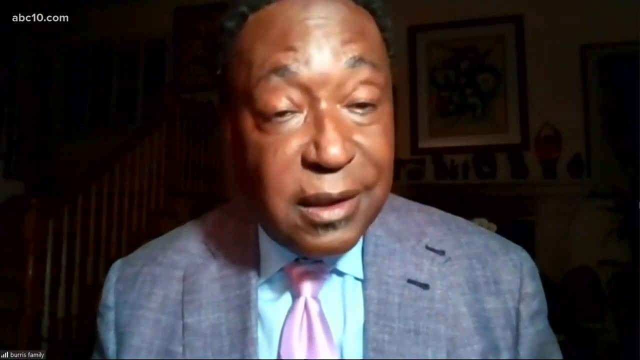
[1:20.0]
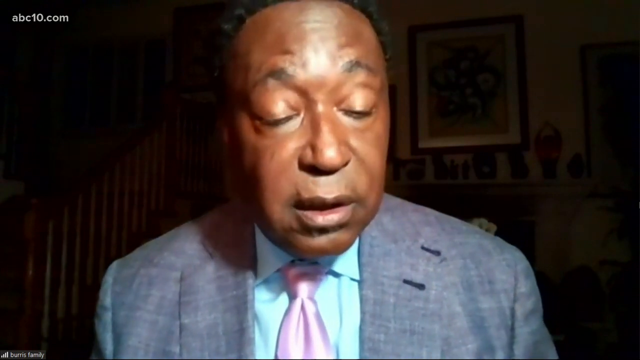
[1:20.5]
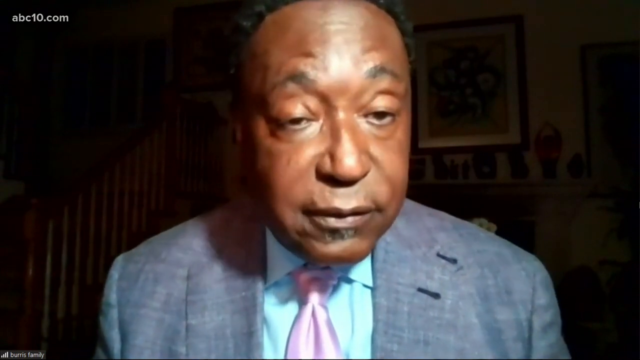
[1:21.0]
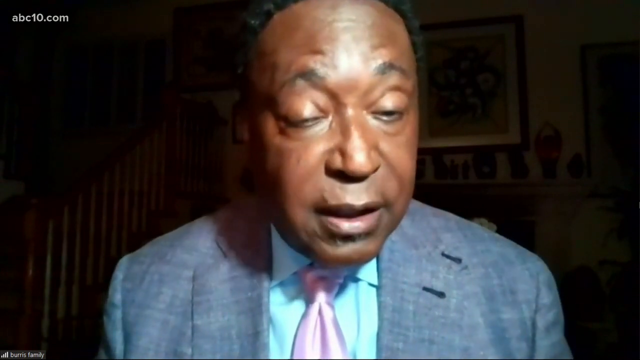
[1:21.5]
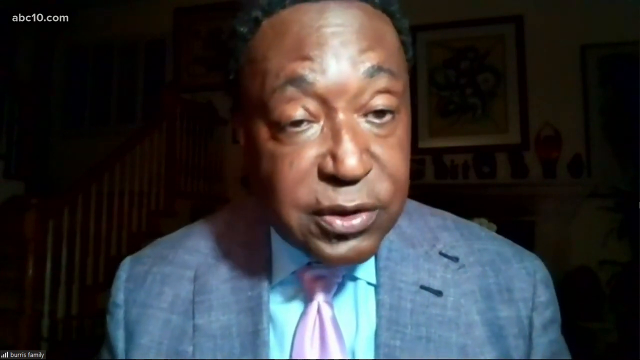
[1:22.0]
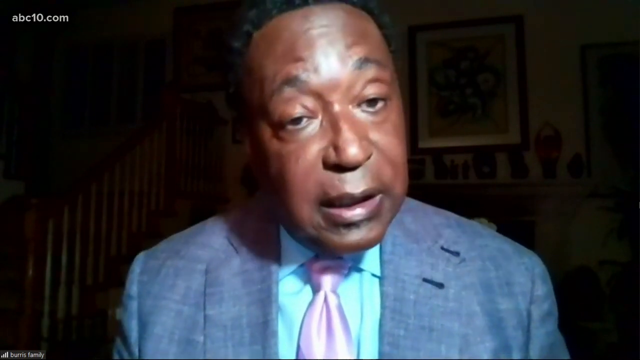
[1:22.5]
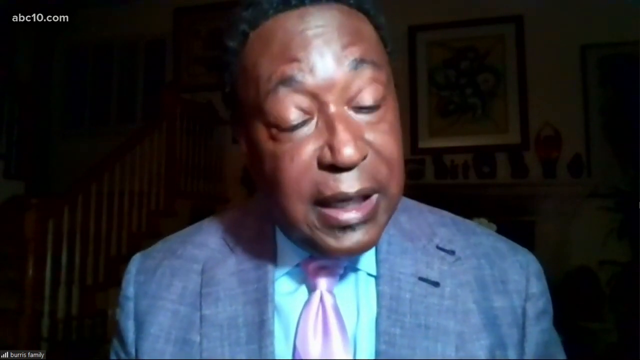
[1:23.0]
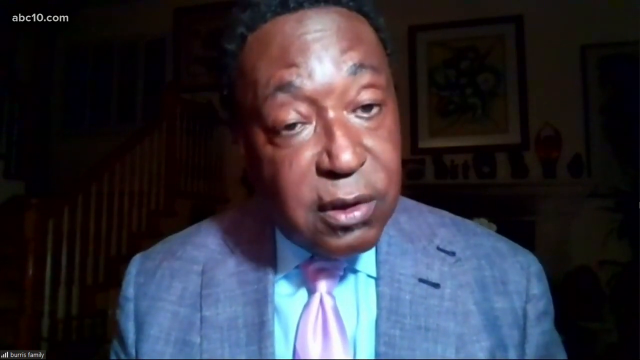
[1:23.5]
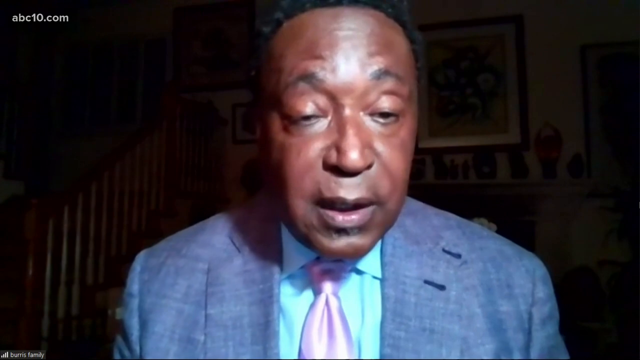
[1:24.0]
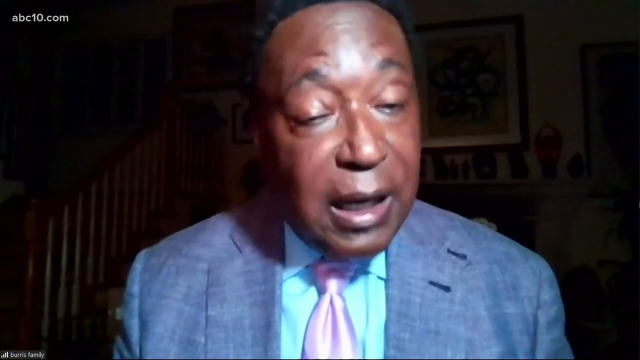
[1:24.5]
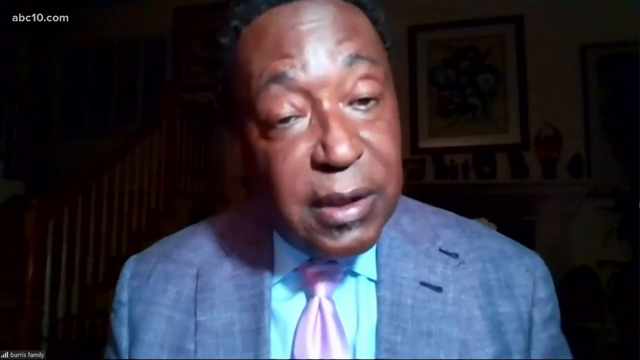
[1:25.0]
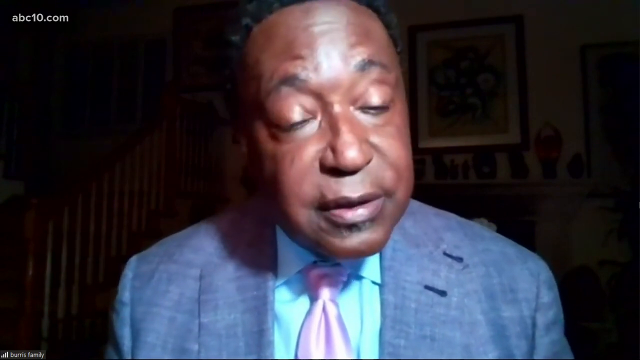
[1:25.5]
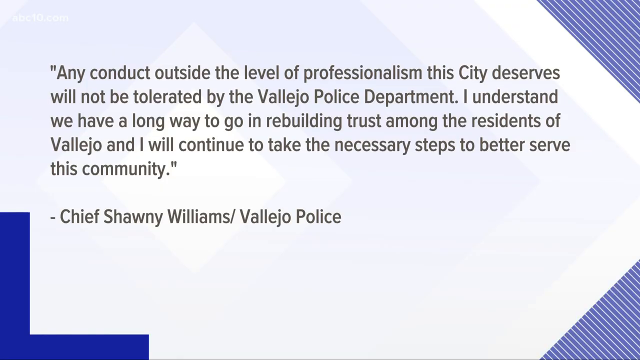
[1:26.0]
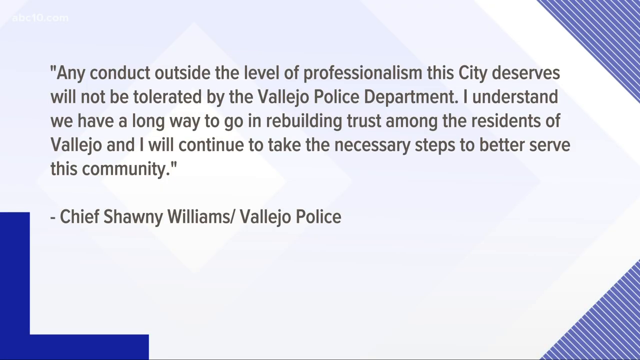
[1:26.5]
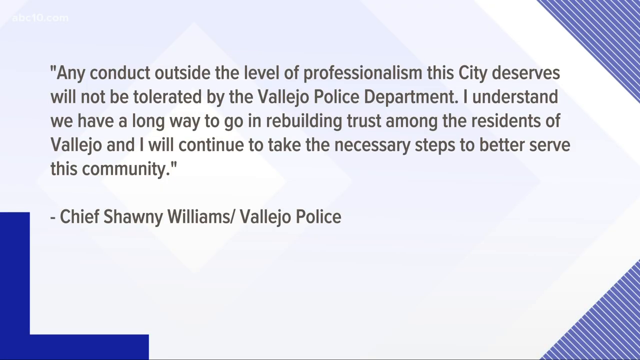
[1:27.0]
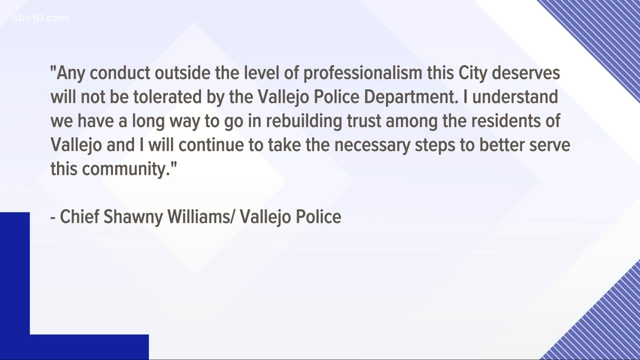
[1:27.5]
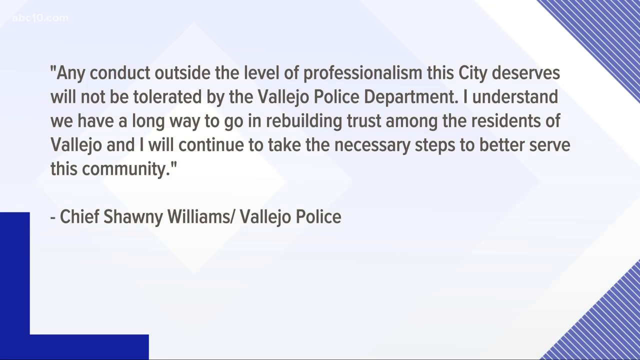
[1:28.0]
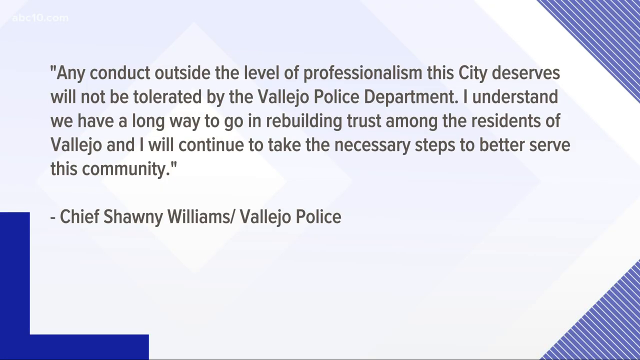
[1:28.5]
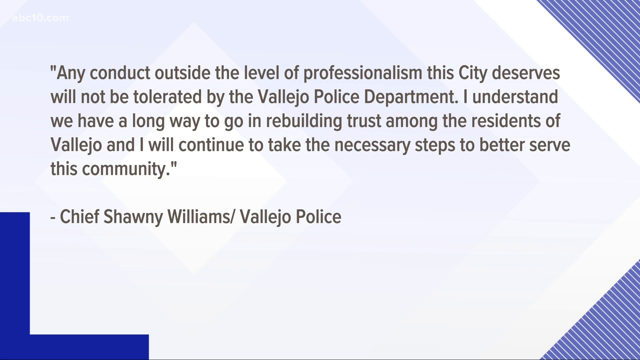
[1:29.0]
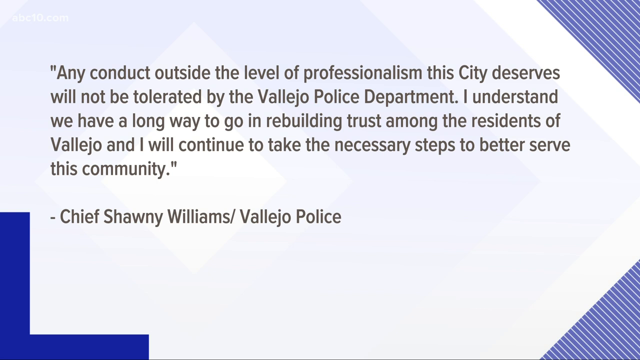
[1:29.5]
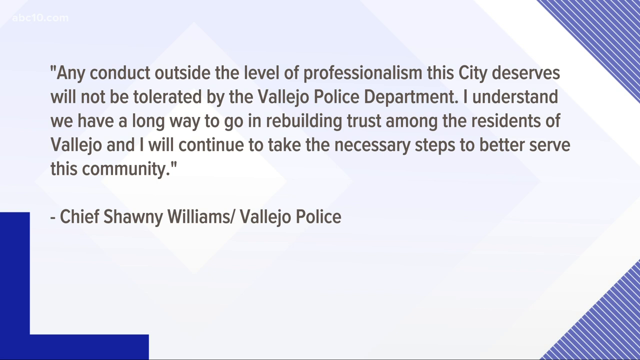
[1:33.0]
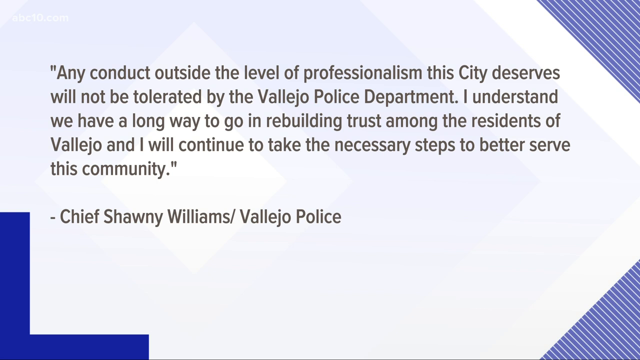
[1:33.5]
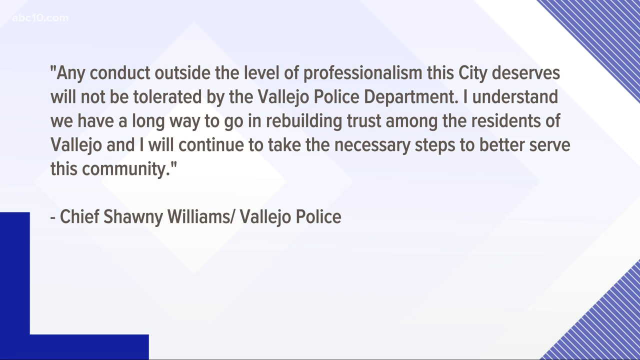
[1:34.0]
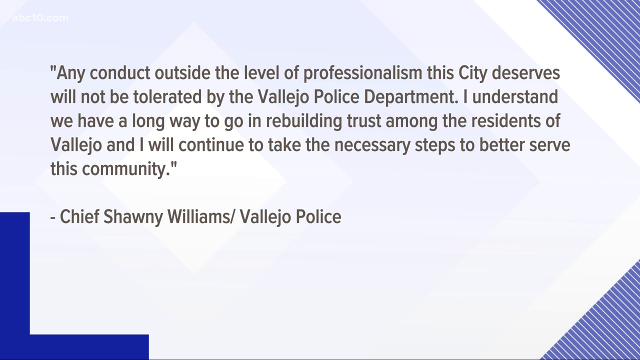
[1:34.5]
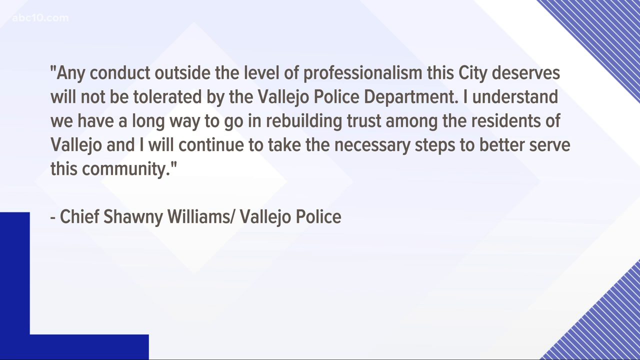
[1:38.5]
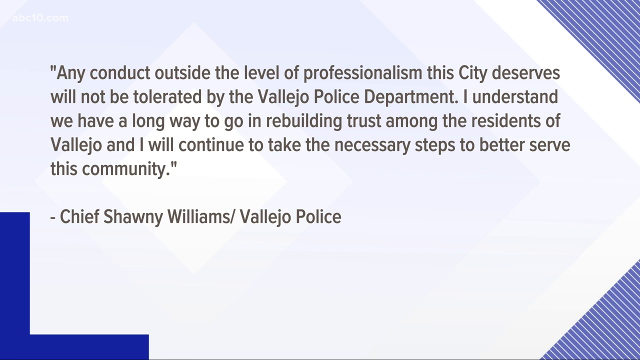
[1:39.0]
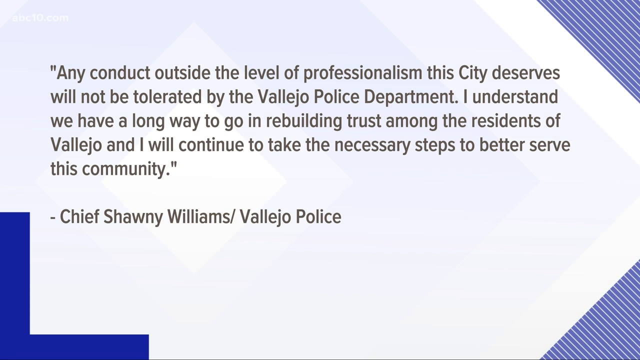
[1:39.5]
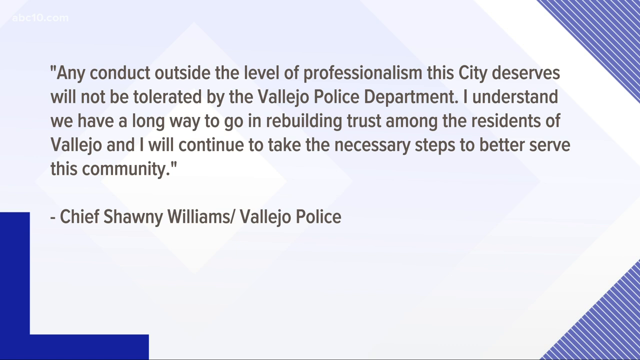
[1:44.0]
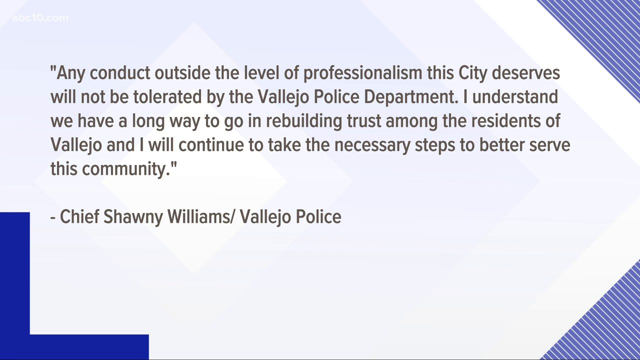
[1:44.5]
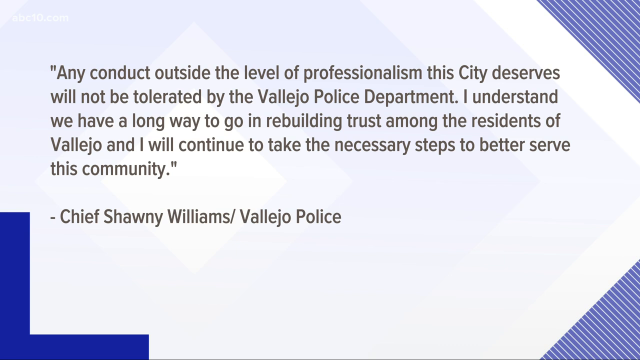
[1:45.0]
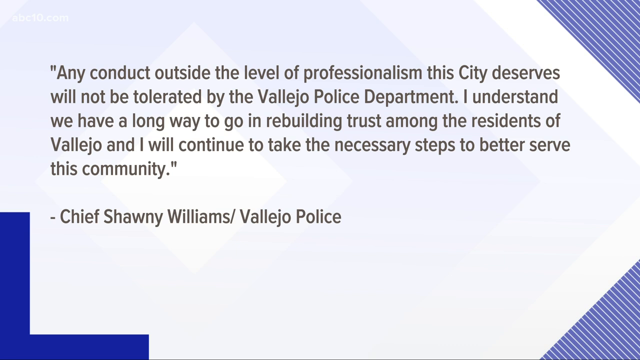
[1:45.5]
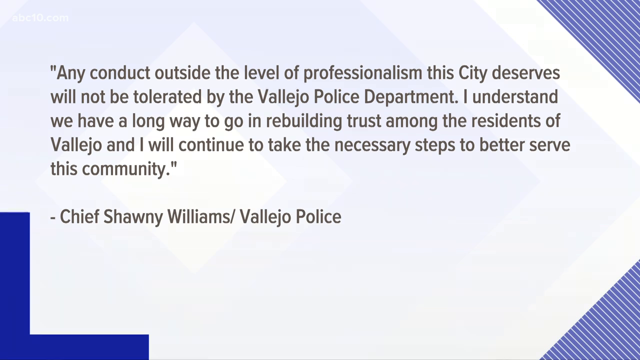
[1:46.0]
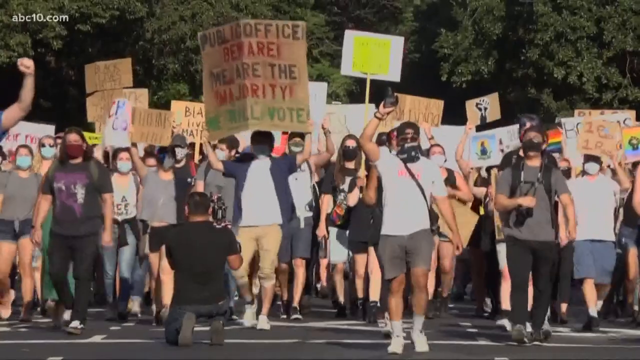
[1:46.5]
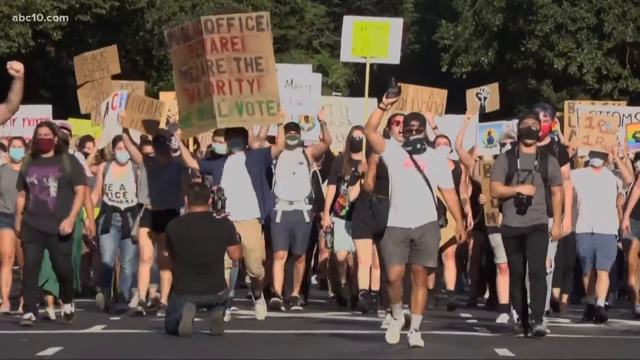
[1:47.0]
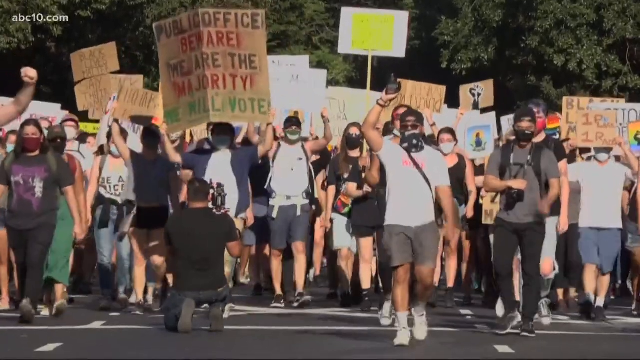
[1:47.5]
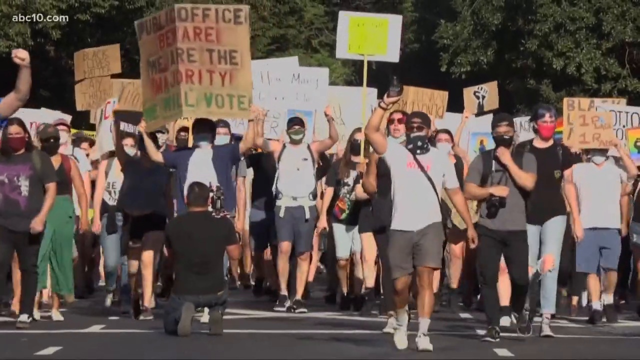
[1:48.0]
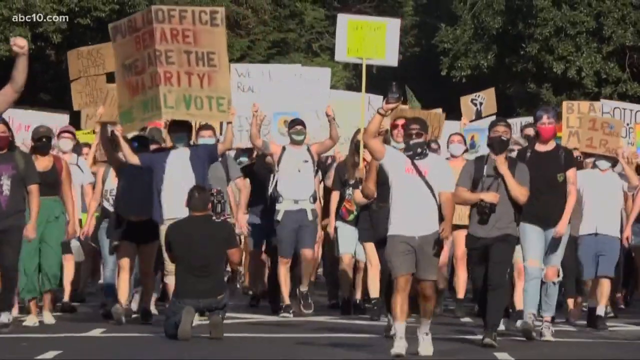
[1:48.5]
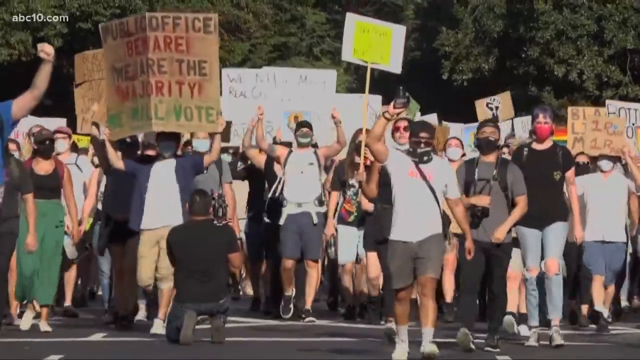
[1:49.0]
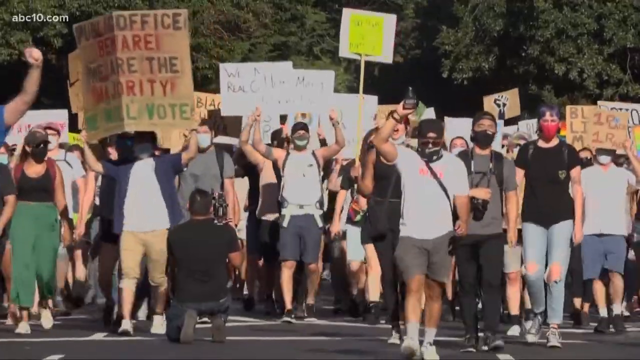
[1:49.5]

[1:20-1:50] The lawyer speaks to the camera again. It looks like he is in his home, with a balcony or staircase right behind him to his left and a mantel with some items on it behind him. He continues to address the camera, nodding matter-of-factly. The video then cuts to a screen with text that seems to be a quotation from the chief, Shawnee Williams of Vallejo Police. It stays on that screen for a couple of seconds, with some purple lines and some blue lines in the background. It then cuts to footage of what looks like a very large protest, with several people walking toward the camera. A man faces away from the camera; he seems to have a camera himself and holds it toward the group of protesters.